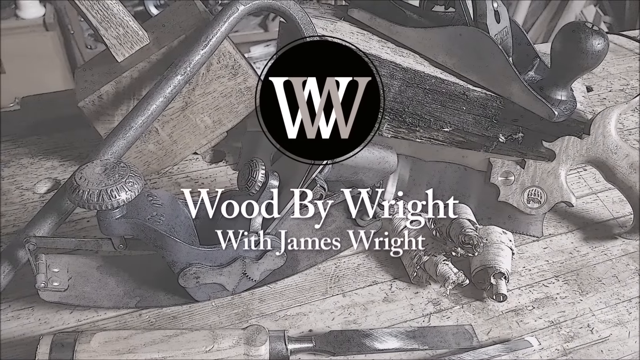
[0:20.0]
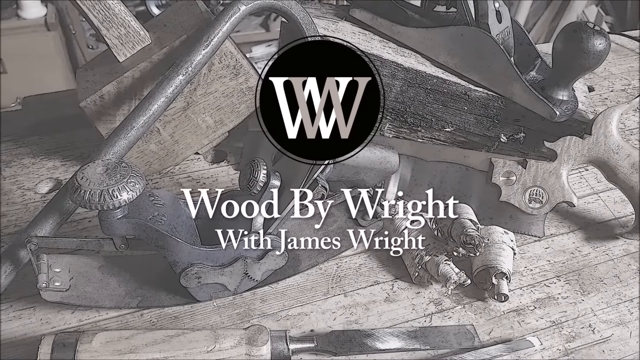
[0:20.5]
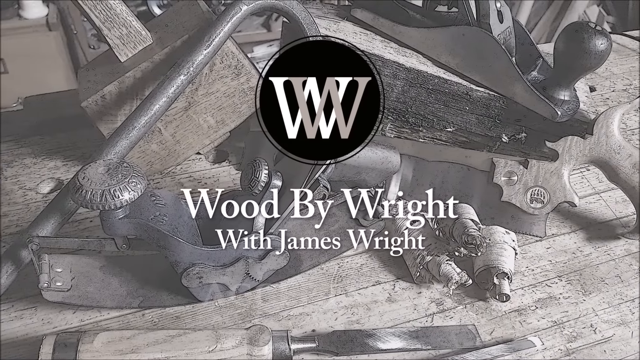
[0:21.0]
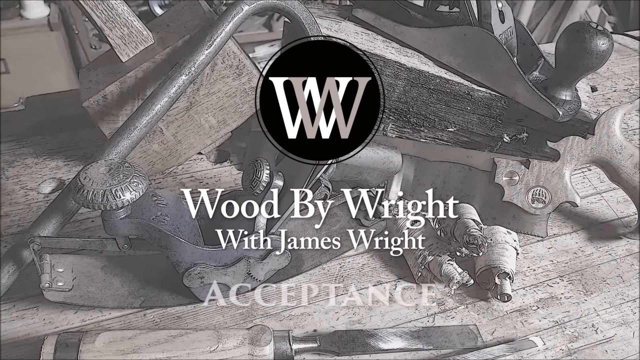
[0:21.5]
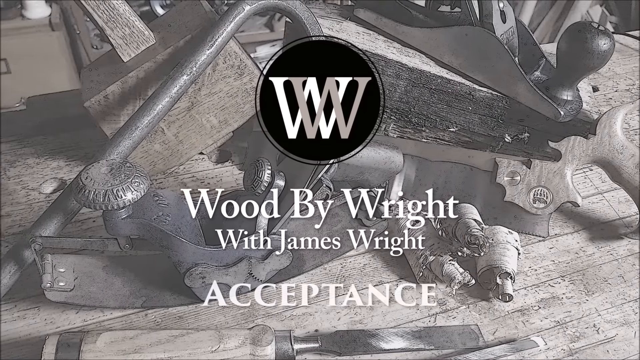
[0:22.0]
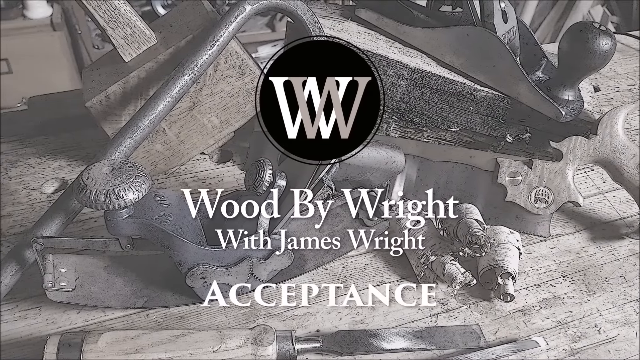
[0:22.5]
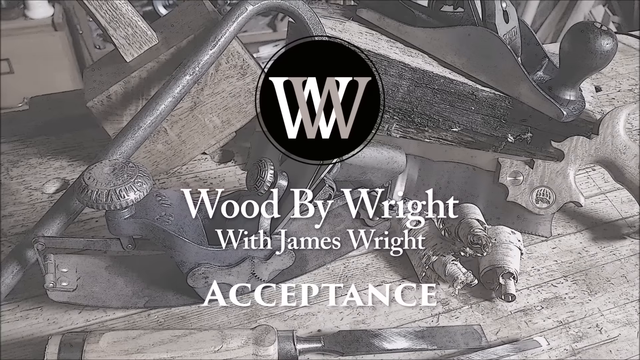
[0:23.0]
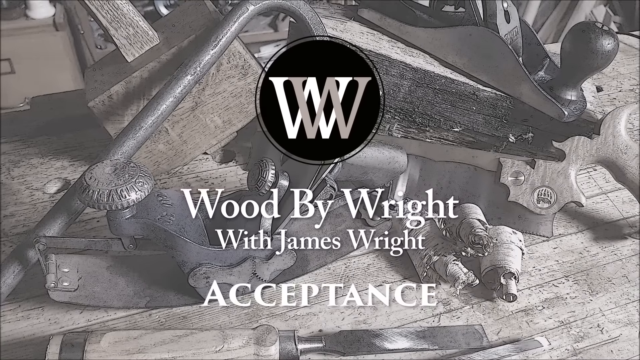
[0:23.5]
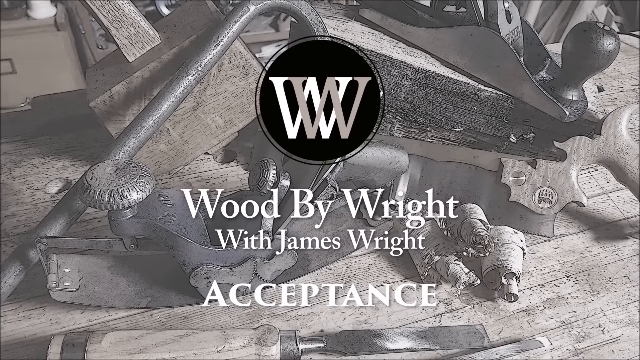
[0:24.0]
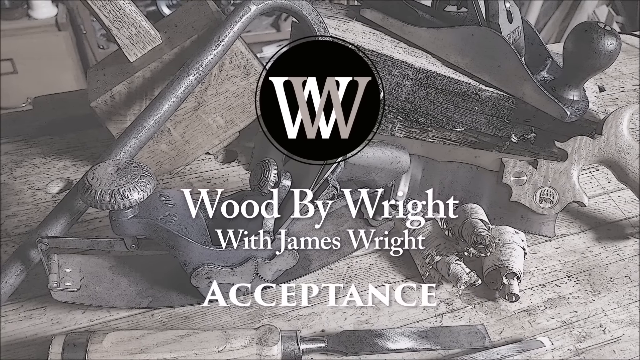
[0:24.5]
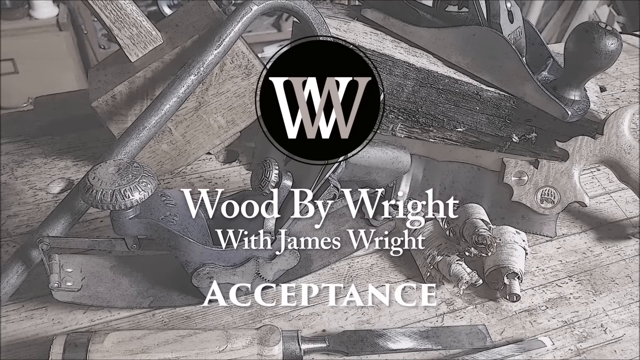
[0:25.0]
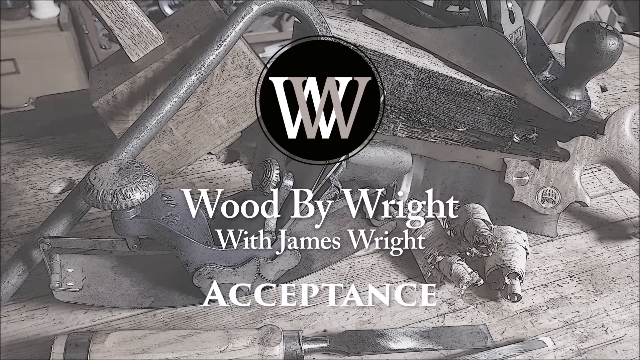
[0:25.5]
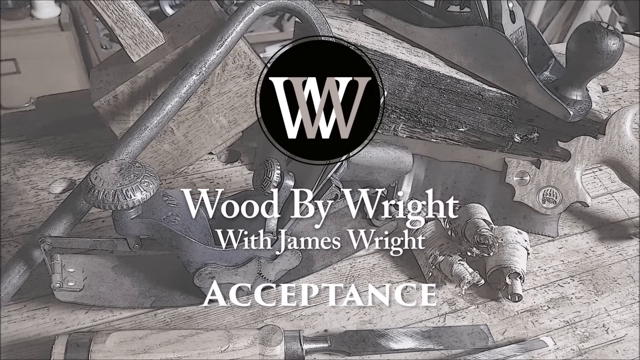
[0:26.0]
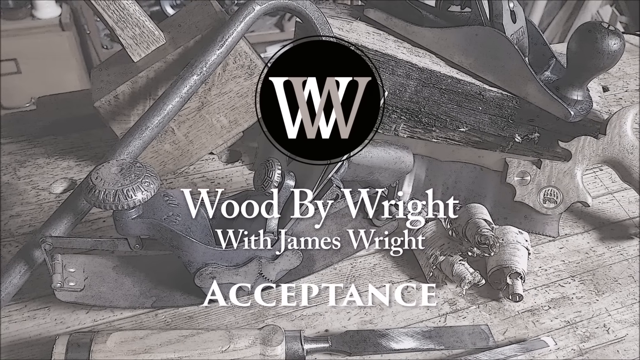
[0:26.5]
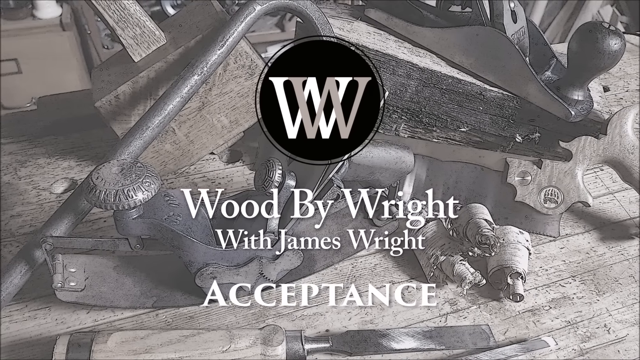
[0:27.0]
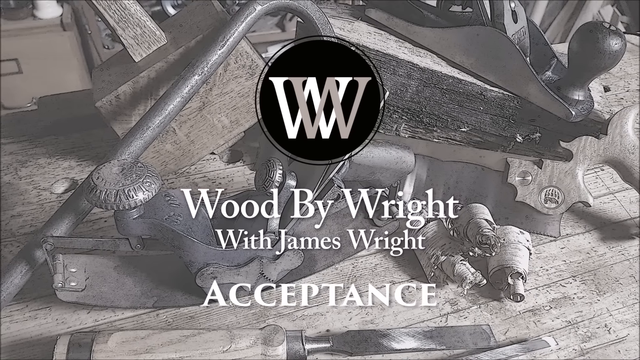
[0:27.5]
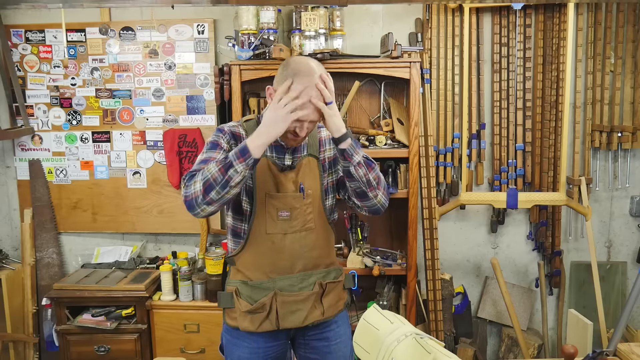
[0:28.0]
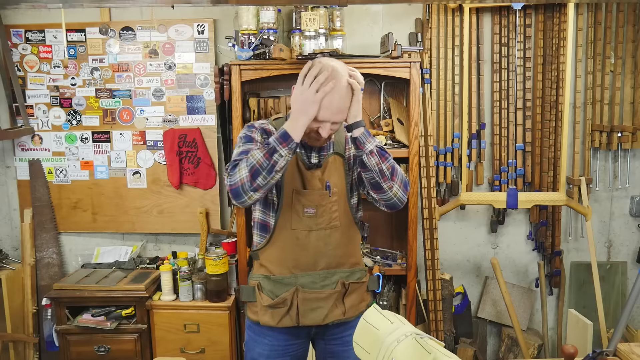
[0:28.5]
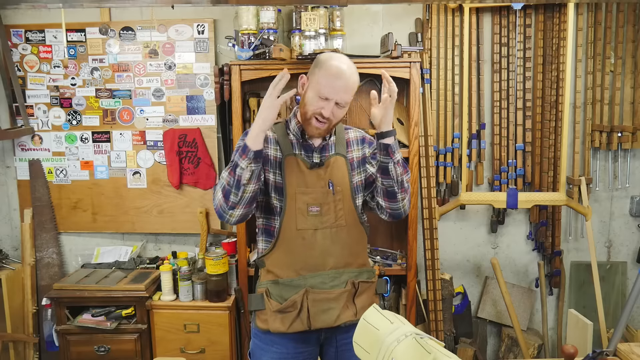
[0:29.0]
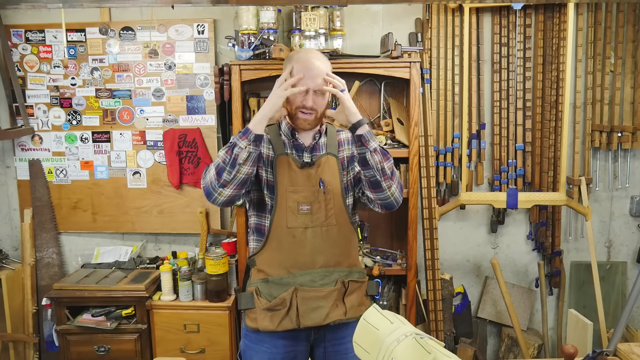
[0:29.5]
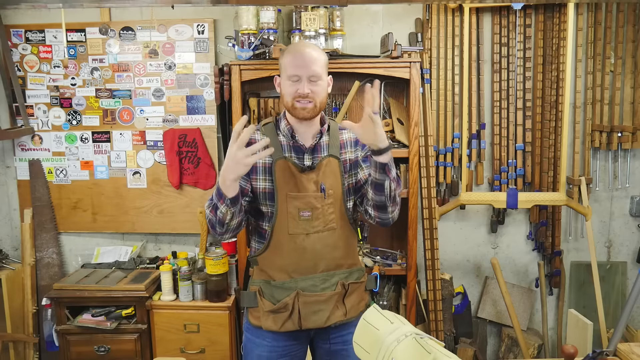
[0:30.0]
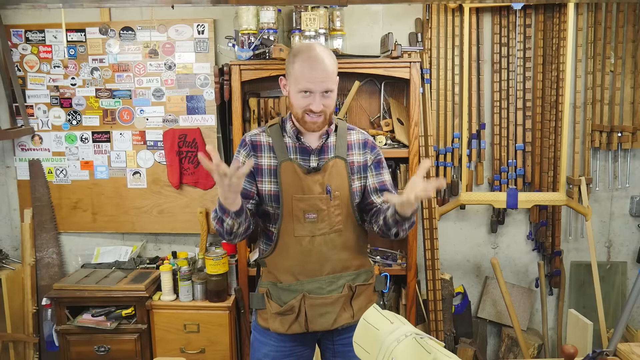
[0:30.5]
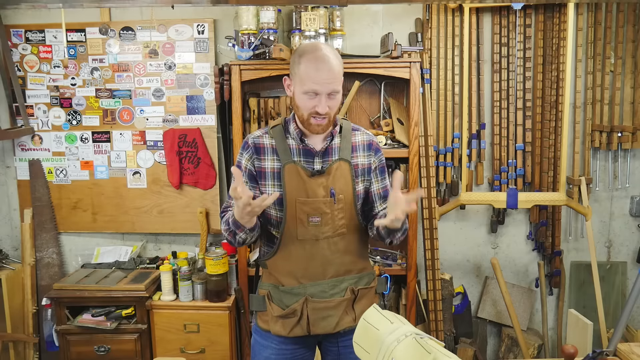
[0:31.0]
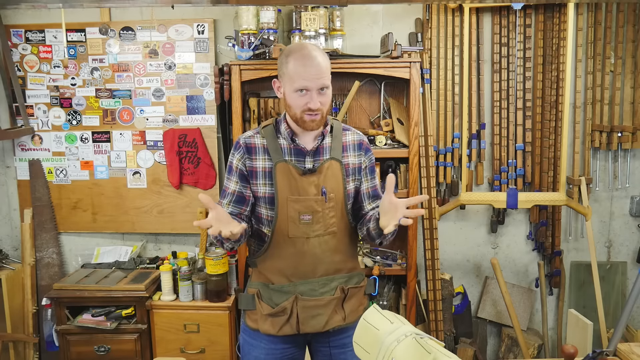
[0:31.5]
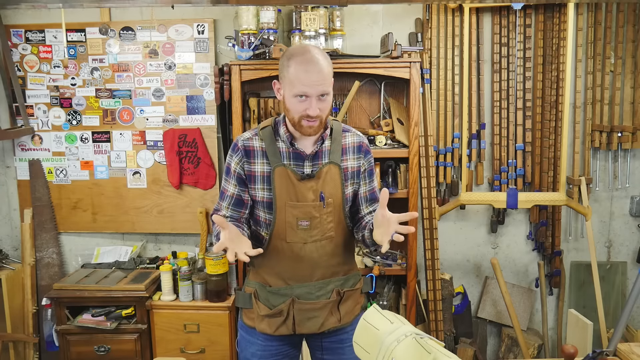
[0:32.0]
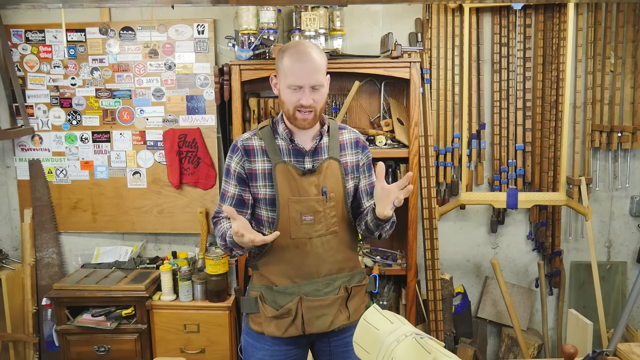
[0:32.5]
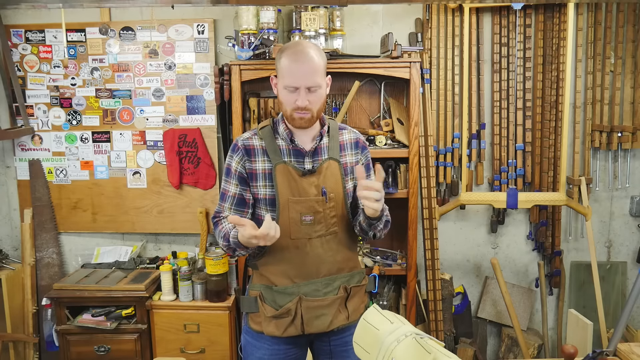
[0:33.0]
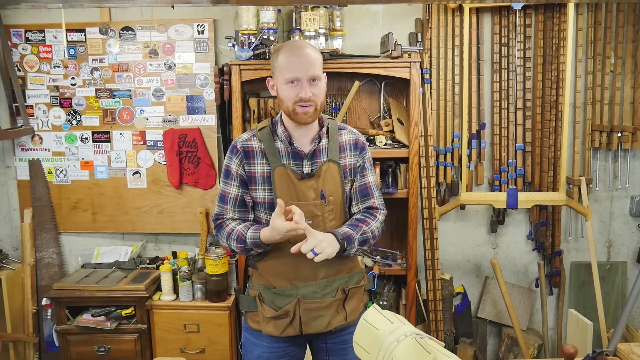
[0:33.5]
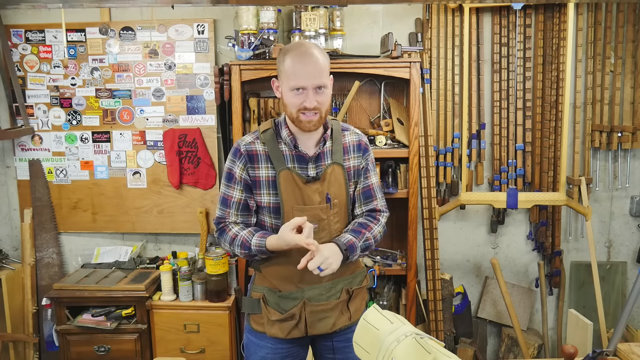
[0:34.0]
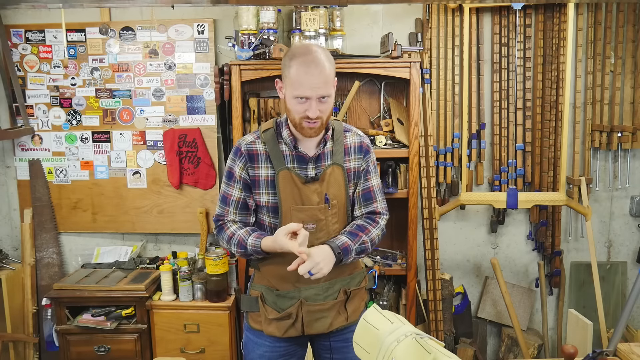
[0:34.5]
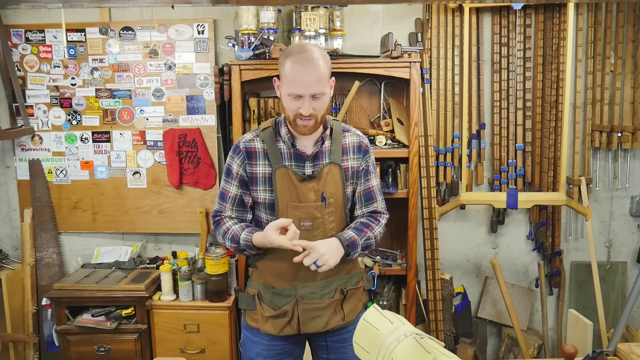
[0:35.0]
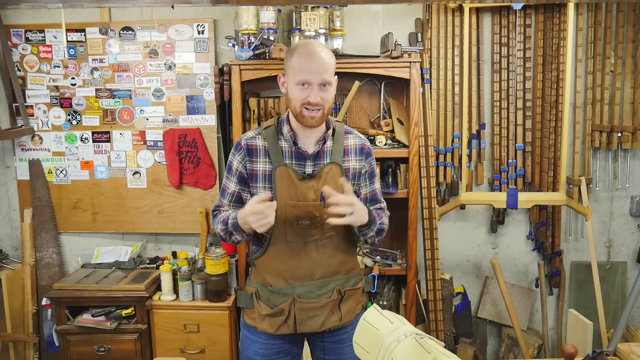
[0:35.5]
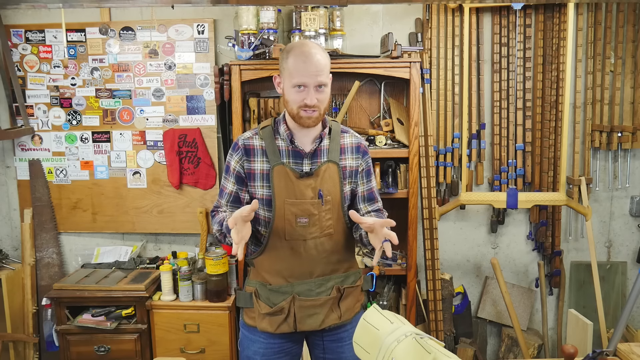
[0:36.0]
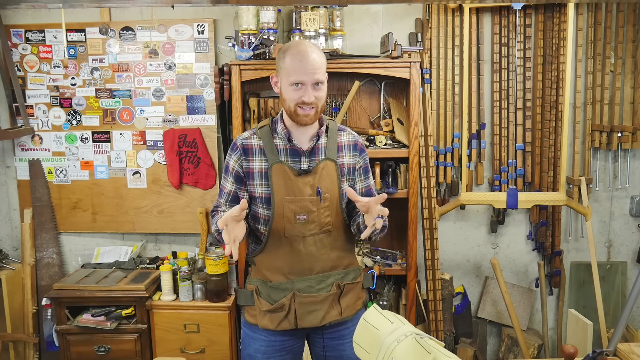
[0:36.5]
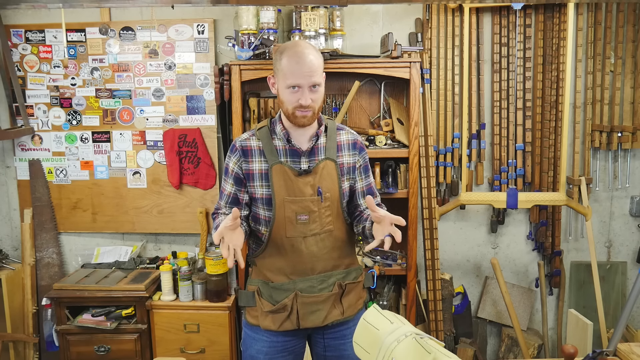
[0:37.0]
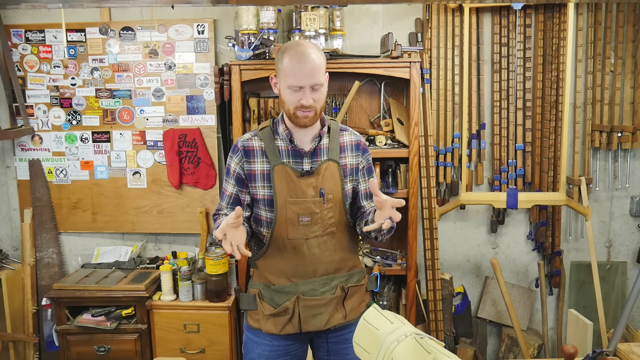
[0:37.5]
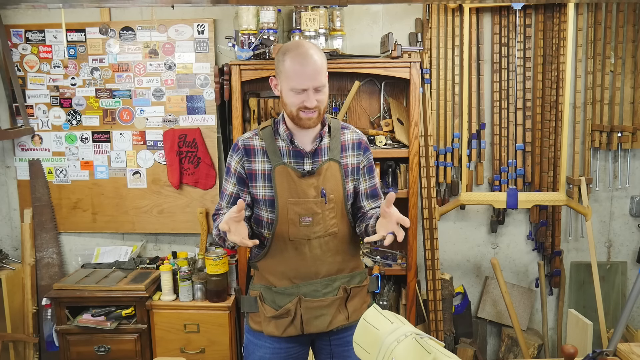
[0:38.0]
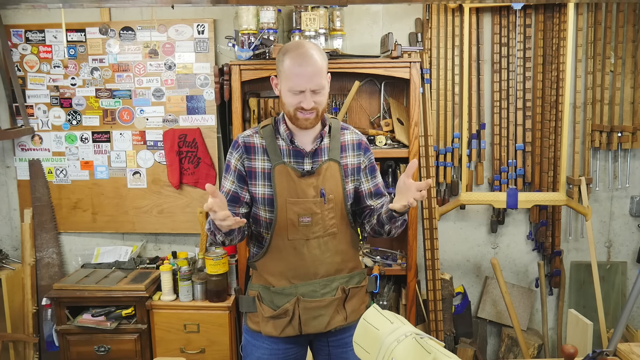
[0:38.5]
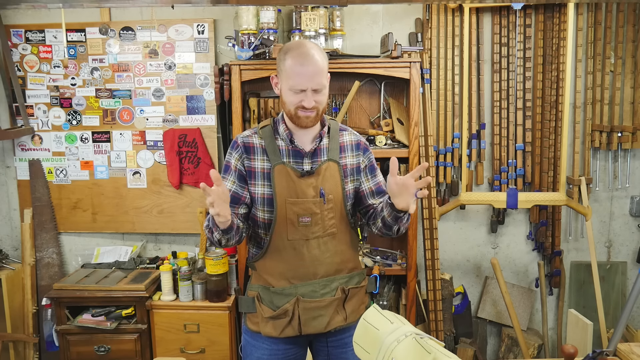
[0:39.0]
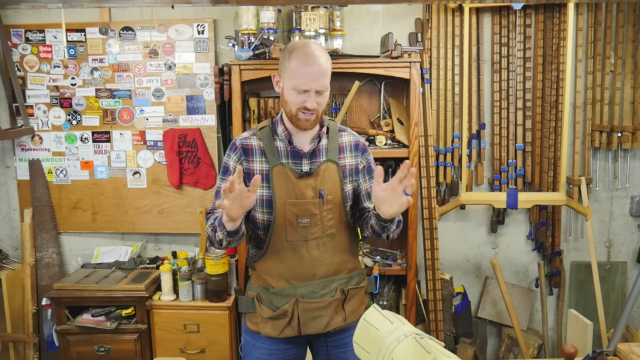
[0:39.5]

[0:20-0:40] A logo appears showing "WW" for two W's, with the text "Wood by Wright with James Wright". The logo is simple and mostly black and white, without many colors. The man talks, and in the background there are many wooden items.